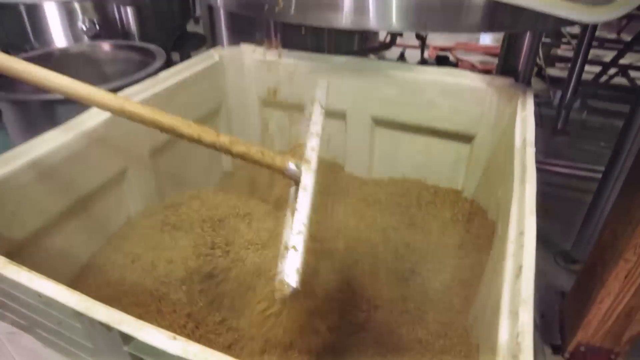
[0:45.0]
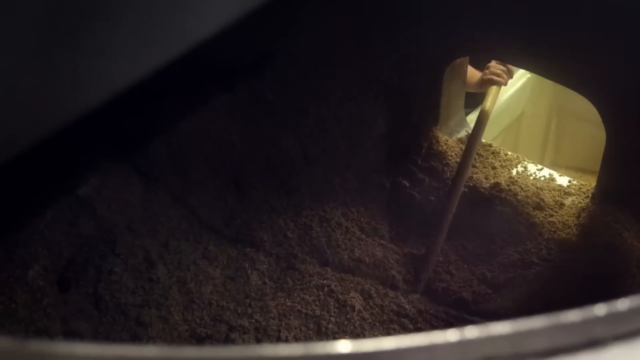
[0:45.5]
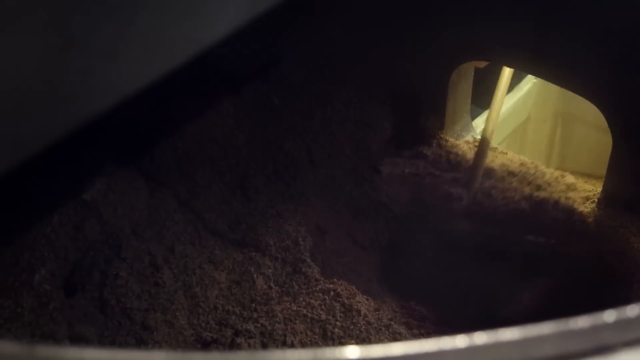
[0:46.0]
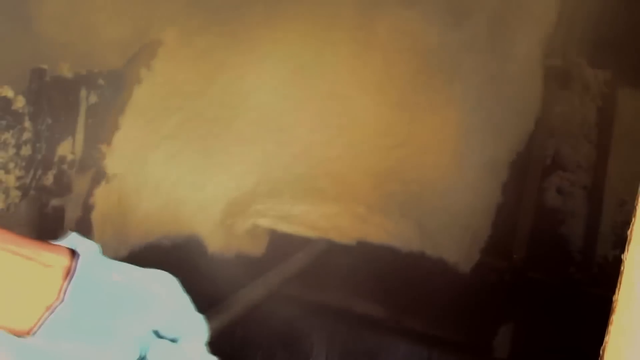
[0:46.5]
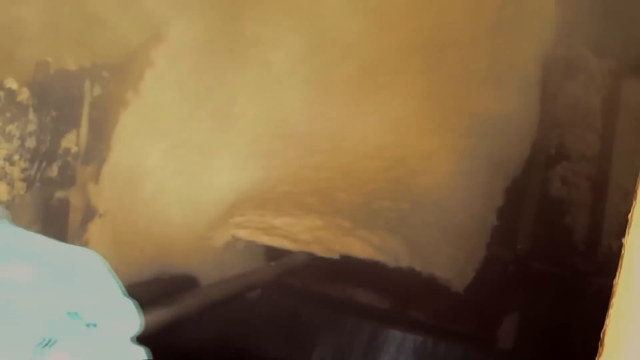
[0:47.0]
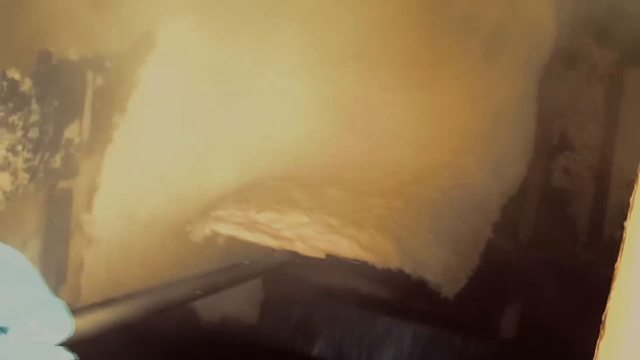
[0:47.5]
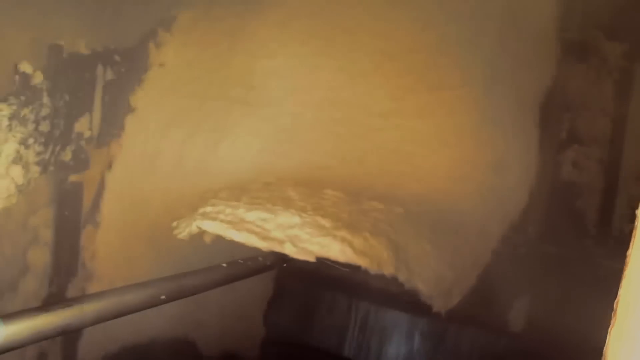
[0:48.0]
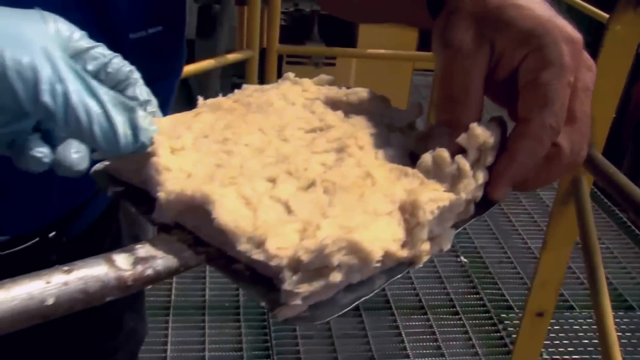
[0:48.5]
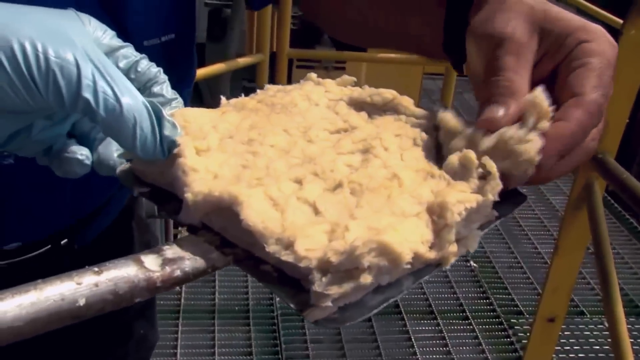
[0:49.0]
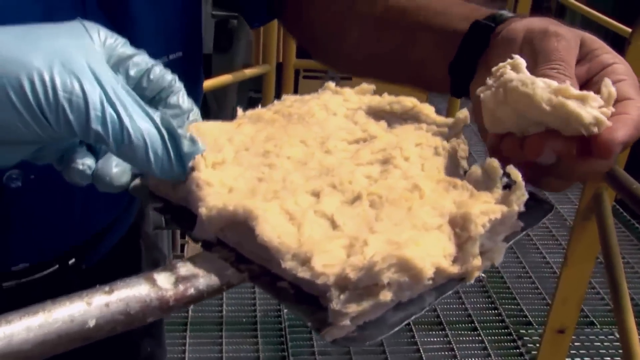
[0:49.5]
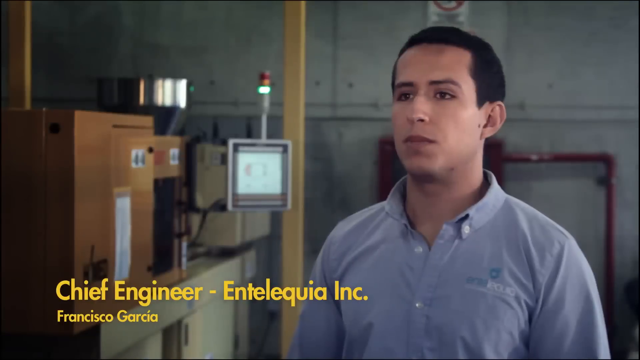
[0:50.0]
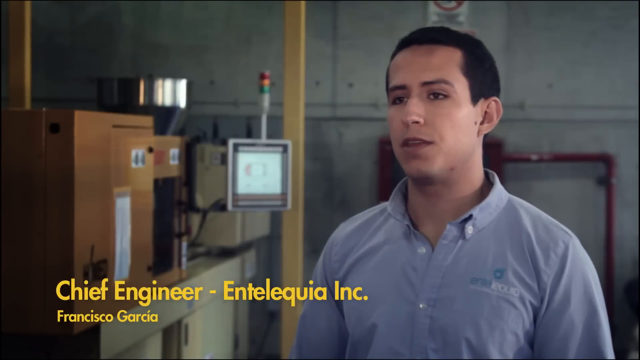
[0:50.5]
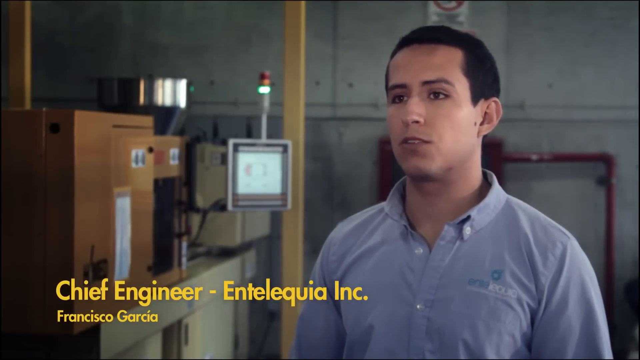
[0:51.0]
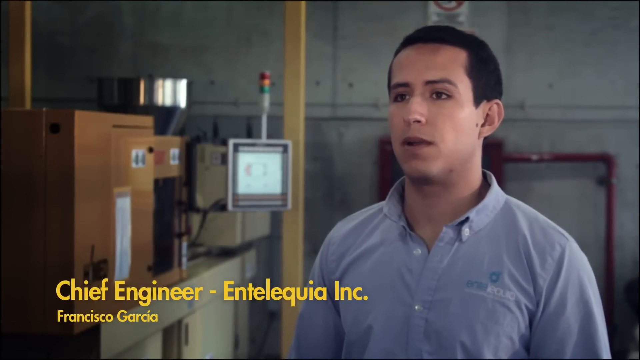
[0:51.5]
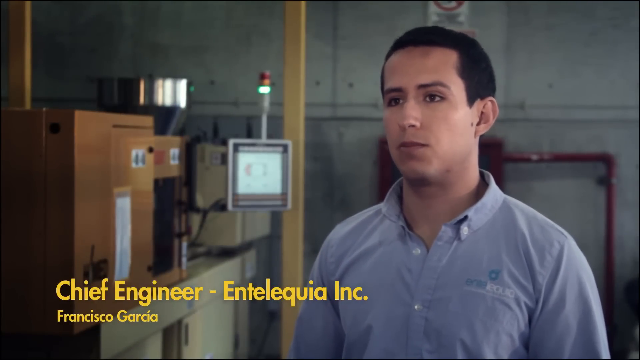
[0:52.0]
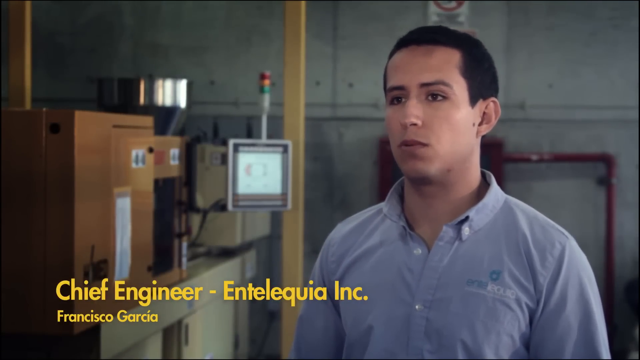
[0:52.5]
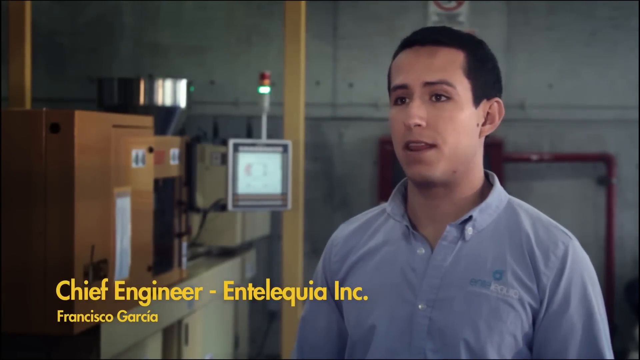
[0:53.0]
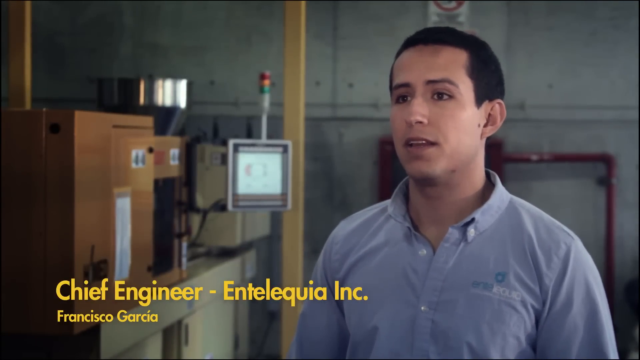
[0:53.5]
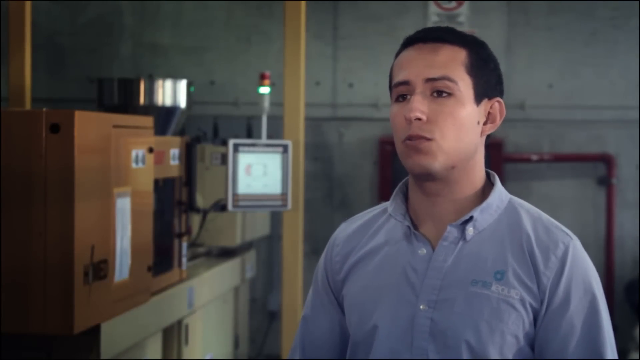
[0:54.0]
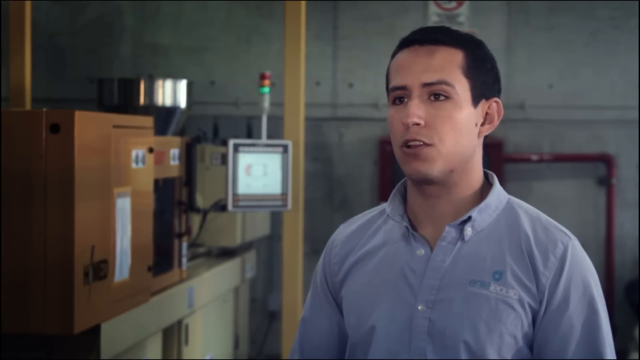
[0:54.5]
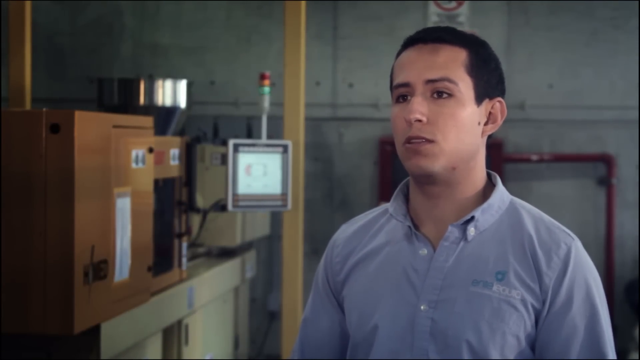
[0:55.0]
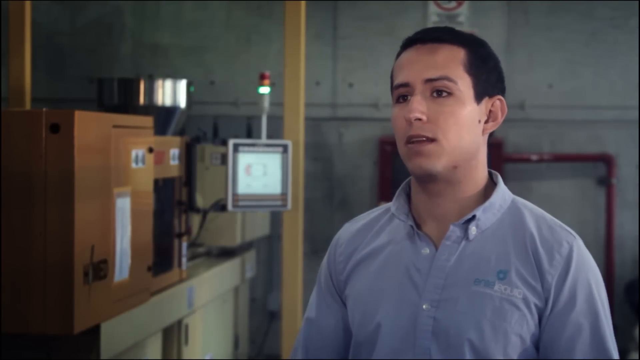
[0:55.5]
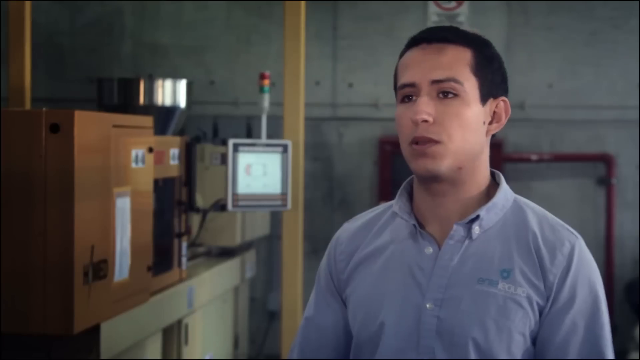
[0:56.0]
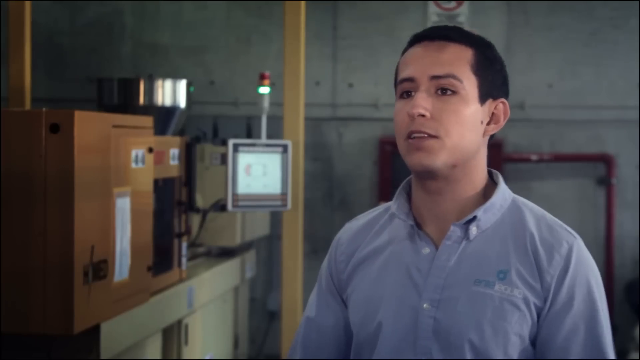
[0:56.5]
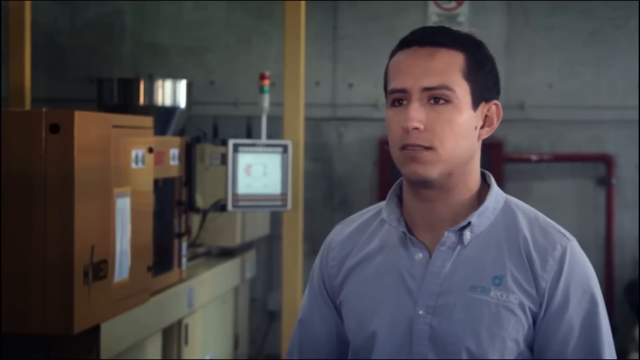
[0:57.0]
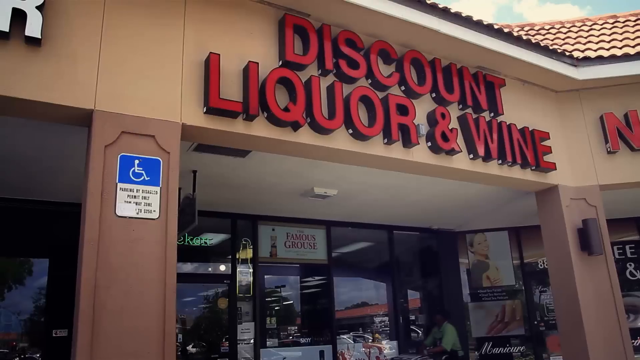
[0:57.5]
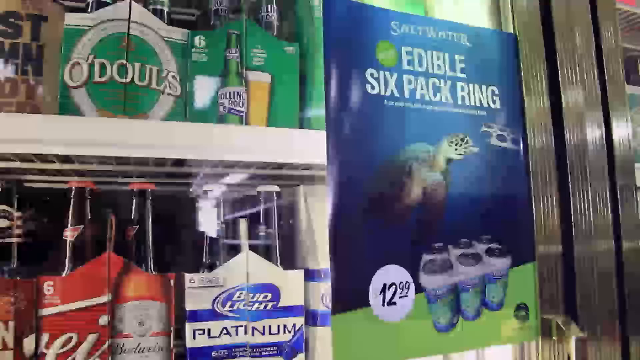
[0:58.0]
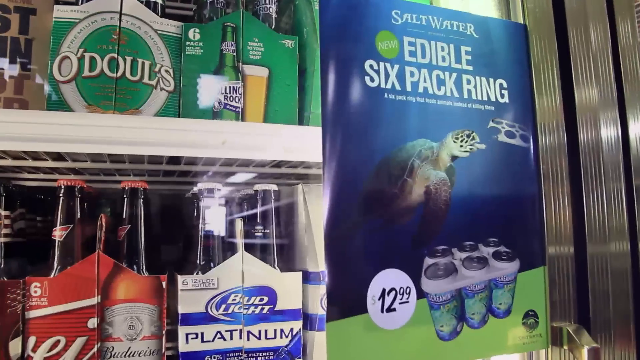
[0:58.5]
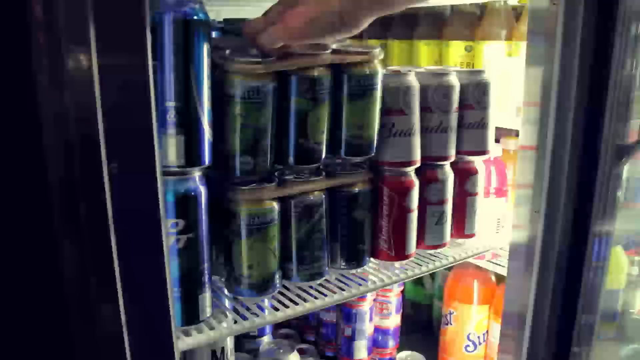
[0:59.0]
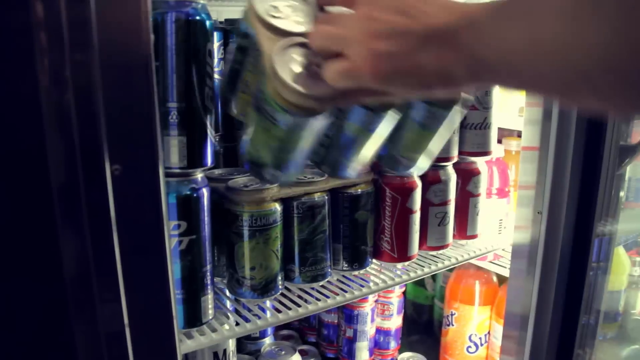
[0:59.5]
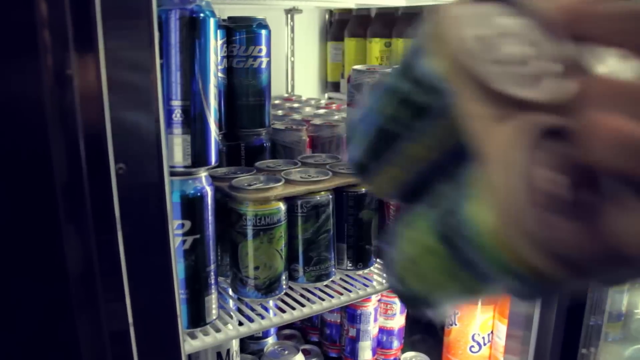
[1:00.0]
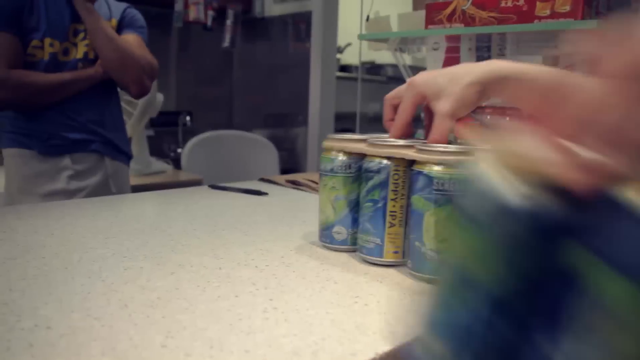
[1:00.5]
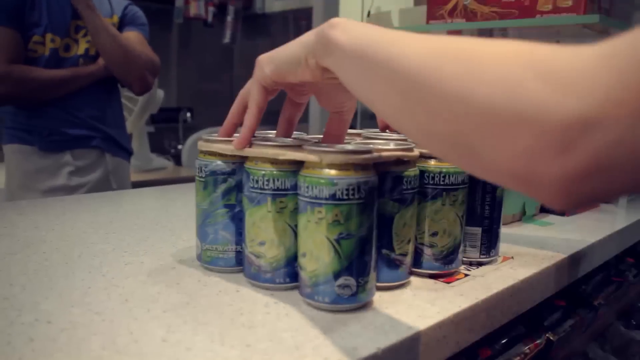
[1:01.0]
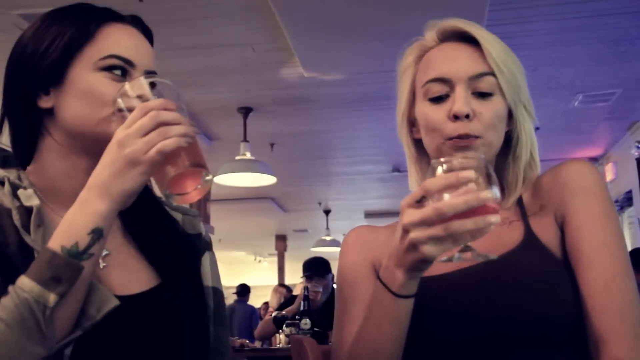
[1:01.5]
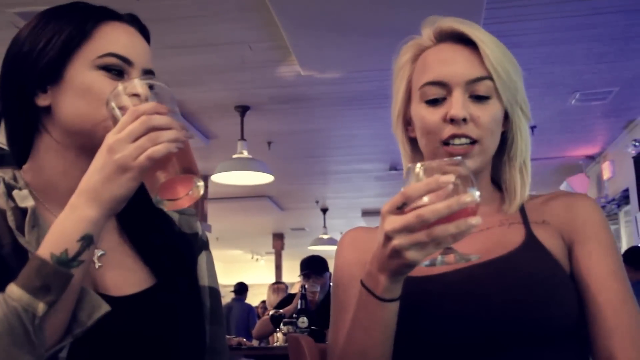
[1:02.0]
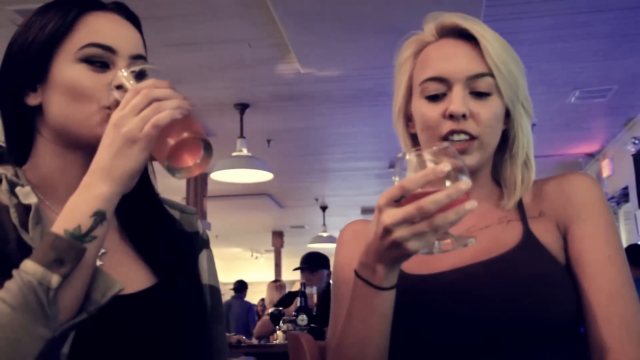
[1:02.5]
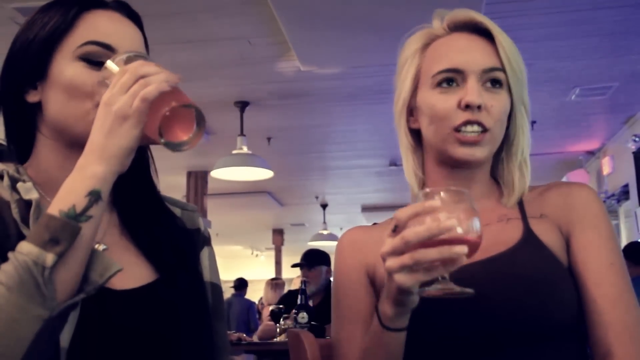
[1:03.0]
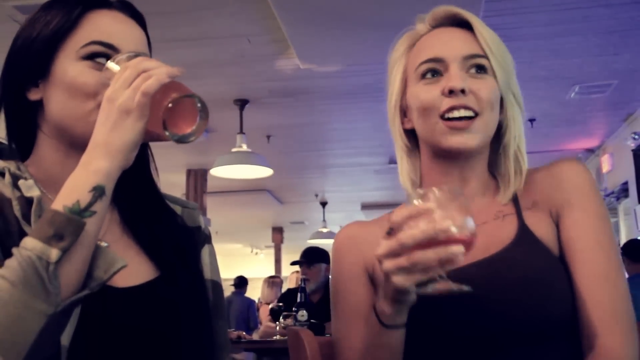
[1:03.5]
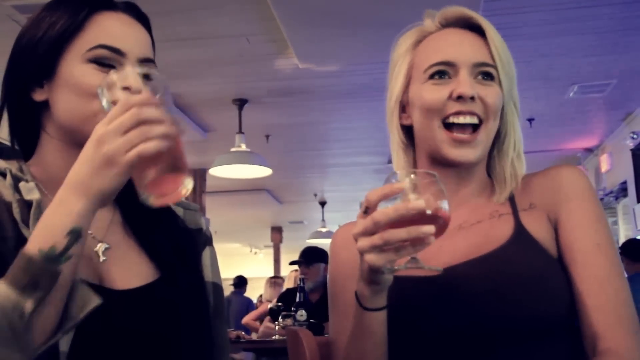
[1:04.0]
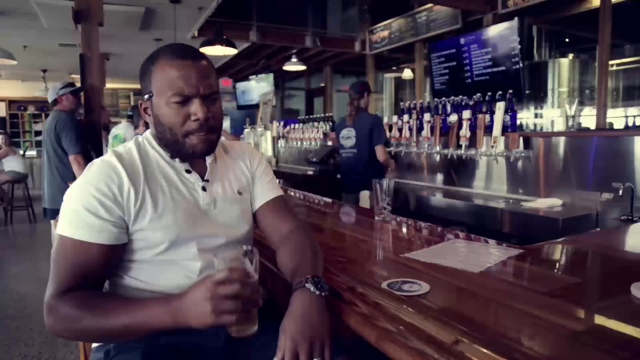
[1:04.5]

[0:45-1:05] It looks like the six-packs are being engineered, and then they are seen in stores, with people buying them in liquor stores. Two women, one with blonde hair and one with black hair, drink their beers at a bar. The settings change very rapidly, moving from a bar to a liquor store to another bar to an area where the product is being produced. The chief engineer, wearing a blue shirt, is seen talking.